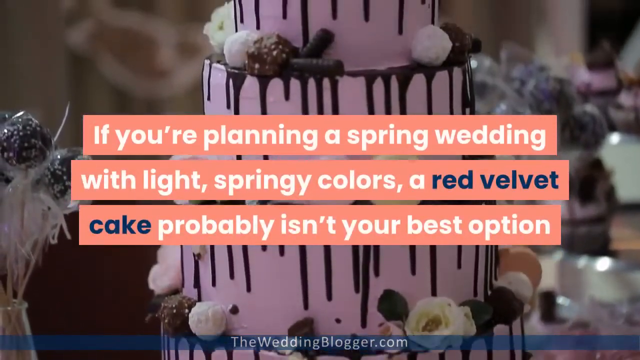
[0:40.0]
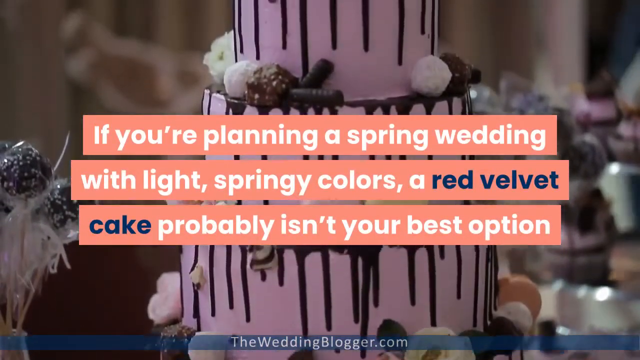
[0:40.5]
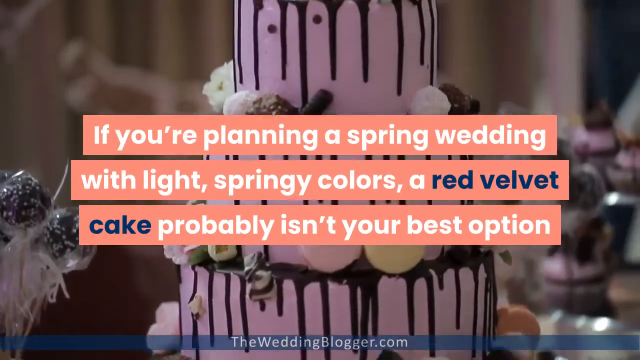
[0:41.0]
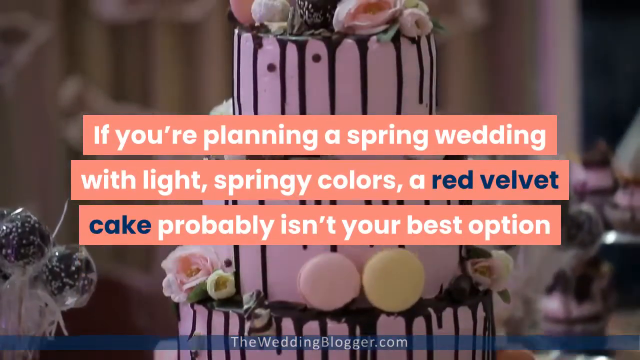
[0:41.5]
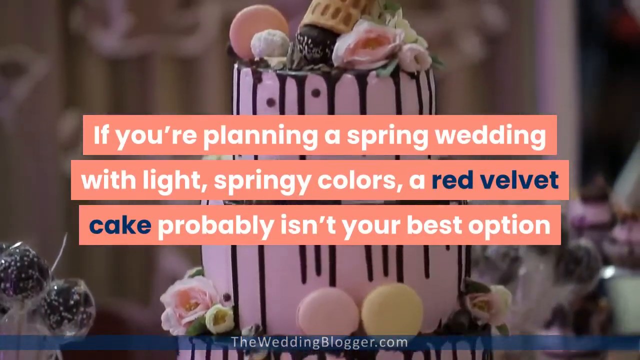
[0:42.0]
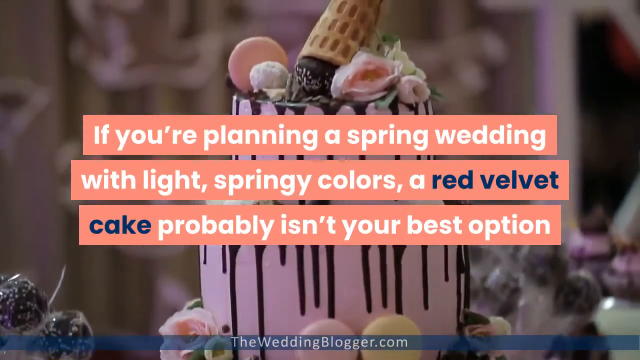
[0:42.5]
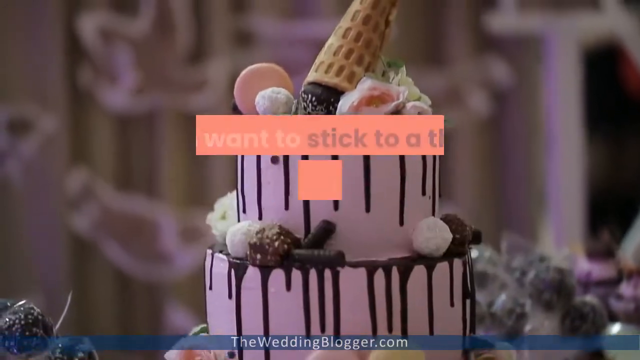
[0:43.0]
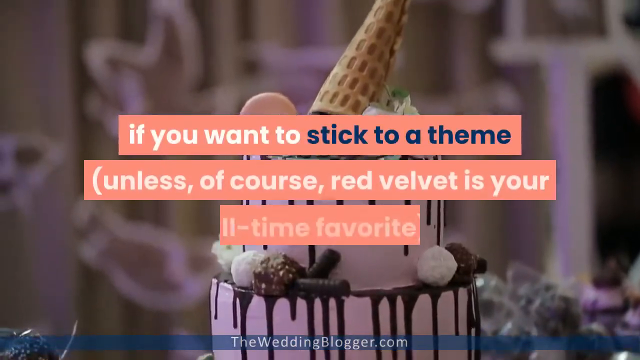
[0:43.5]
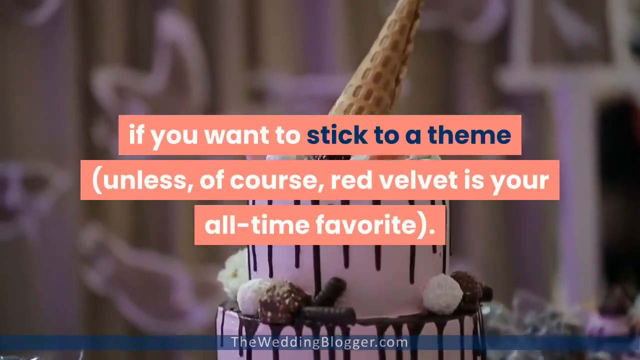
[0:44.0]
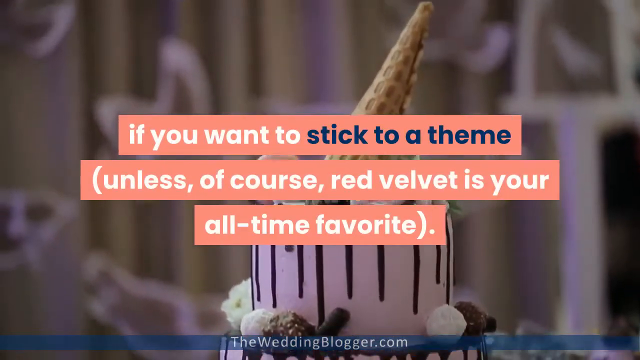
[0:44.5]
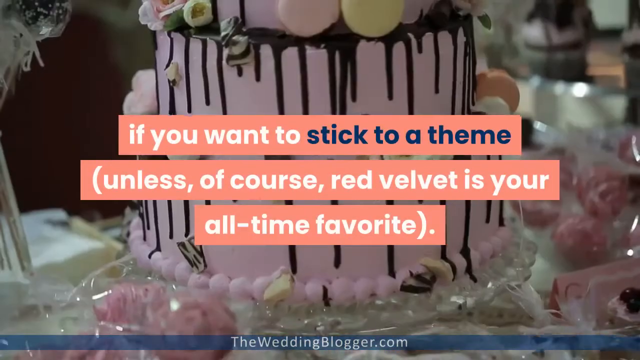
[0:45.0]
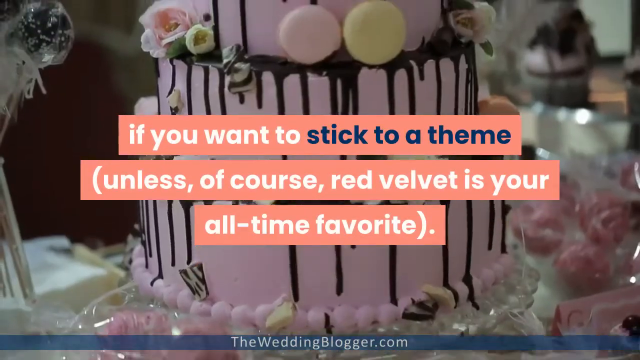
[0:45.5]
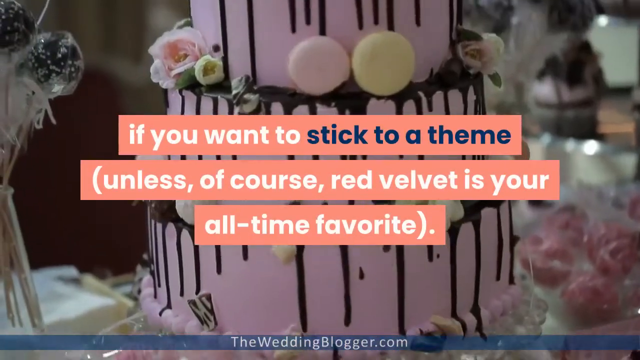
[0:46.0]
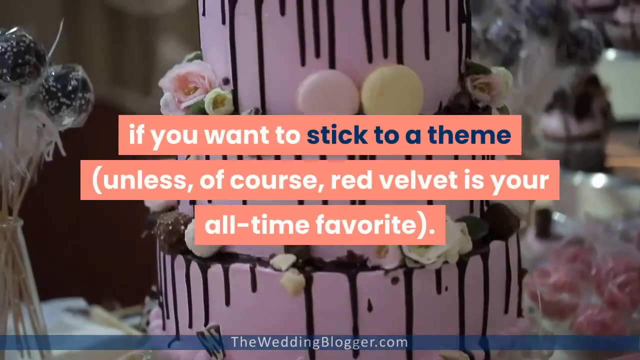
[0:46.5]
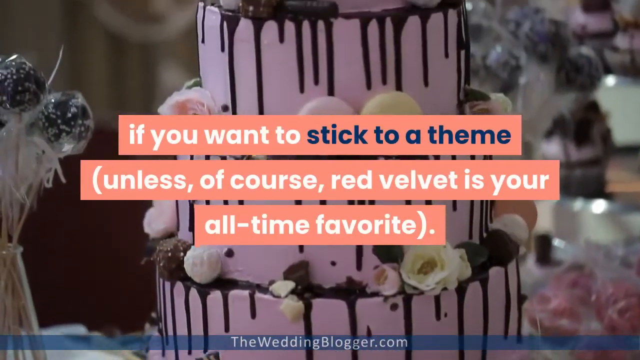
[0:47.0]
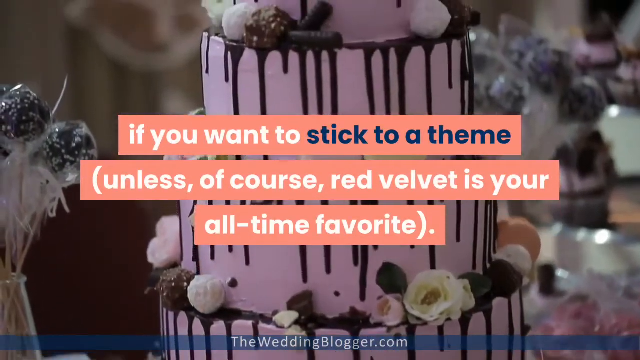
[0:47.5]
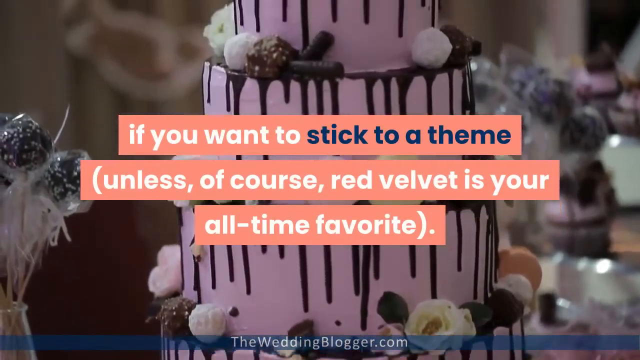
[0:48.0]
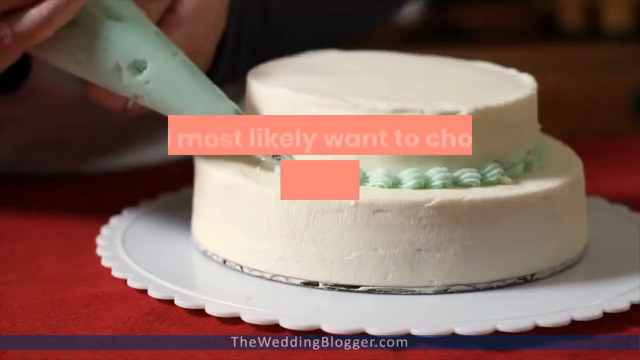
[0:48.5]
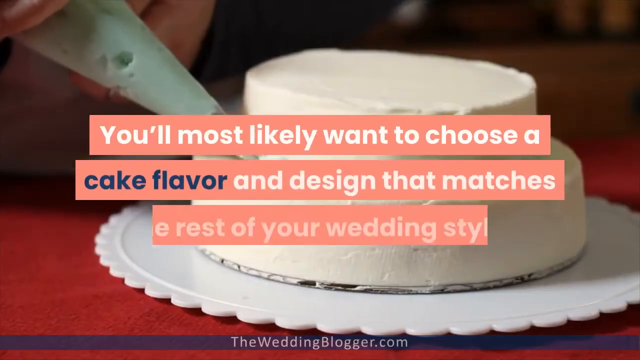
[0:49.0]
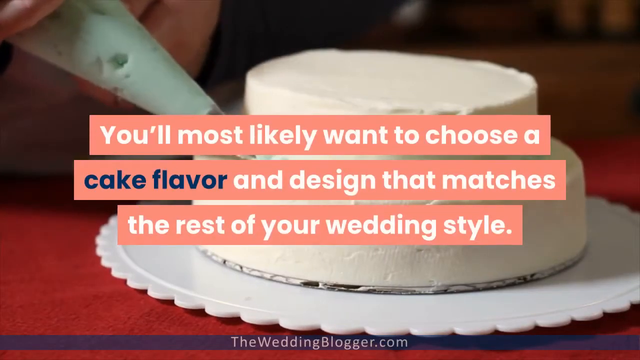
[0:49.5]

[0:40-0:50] Text reads "If you're planning a spring wedding with light, springy colors, a red velvet cake probably isn't your best option." A white tiered cake has chocolate drizzle on it and an upside-down ice cream cone at the top. The text then reads "if you want to stick to a theme, unless of course red velvet is your all time favorites." Another white cake with chocolate drizzle is shown. Text then reads "you'll most likely want to choose a cake flavor and a design that matches the rest of your wedding style," and behind the text a cake is being piped with green frosting.